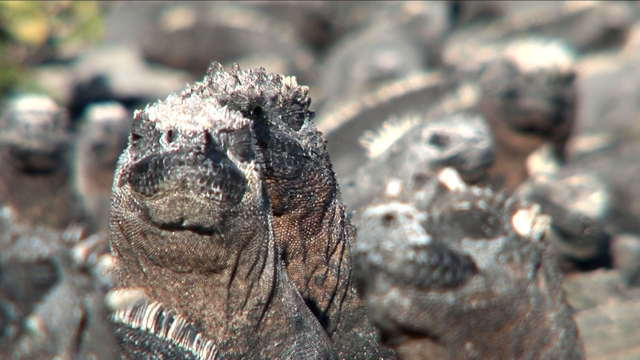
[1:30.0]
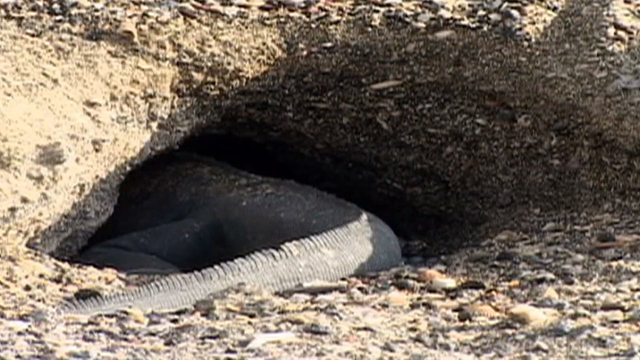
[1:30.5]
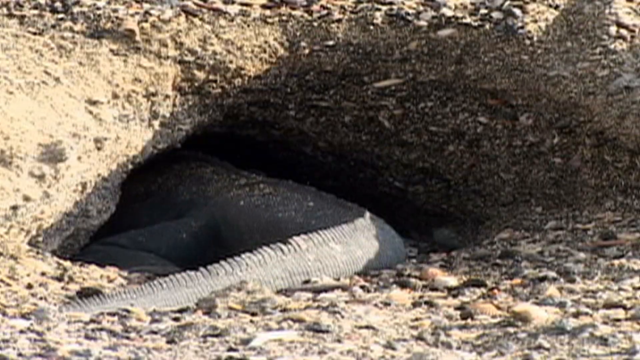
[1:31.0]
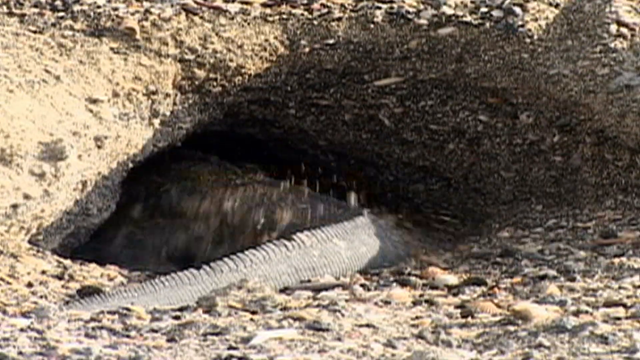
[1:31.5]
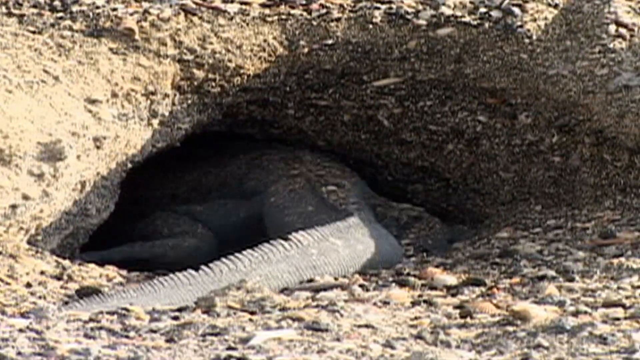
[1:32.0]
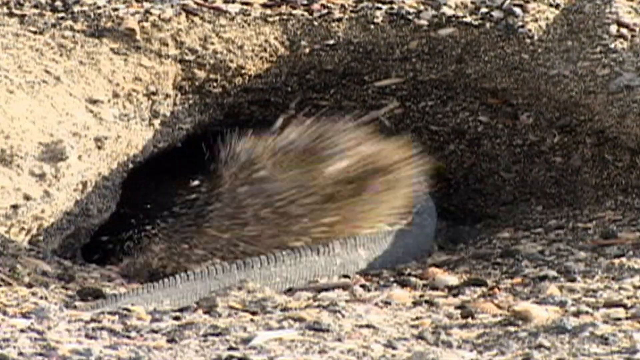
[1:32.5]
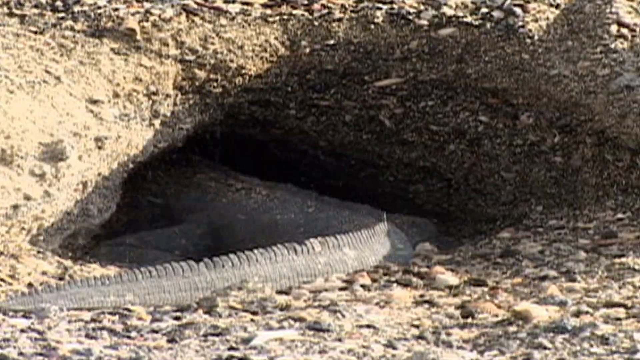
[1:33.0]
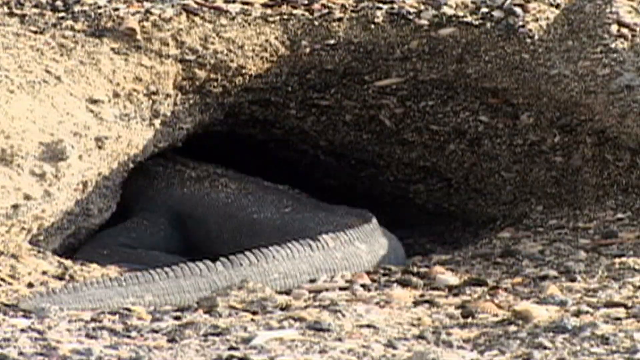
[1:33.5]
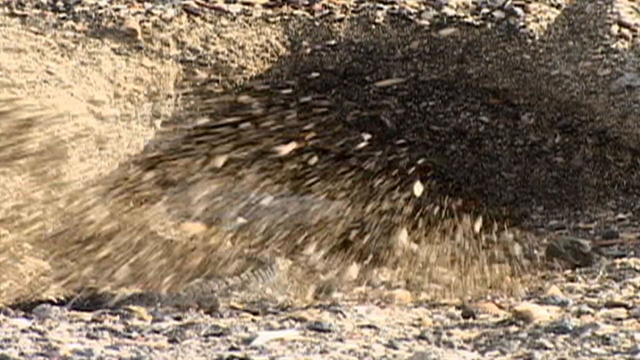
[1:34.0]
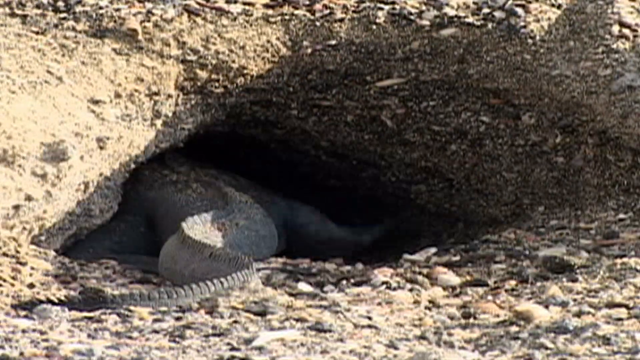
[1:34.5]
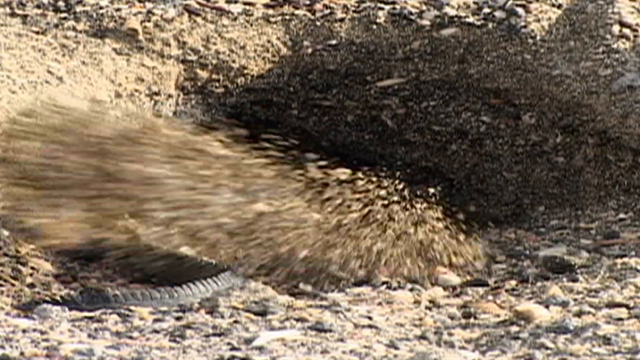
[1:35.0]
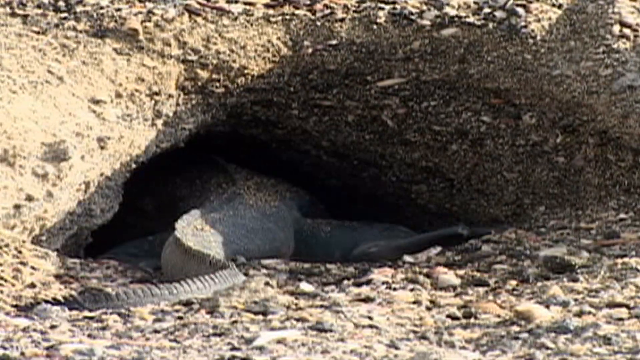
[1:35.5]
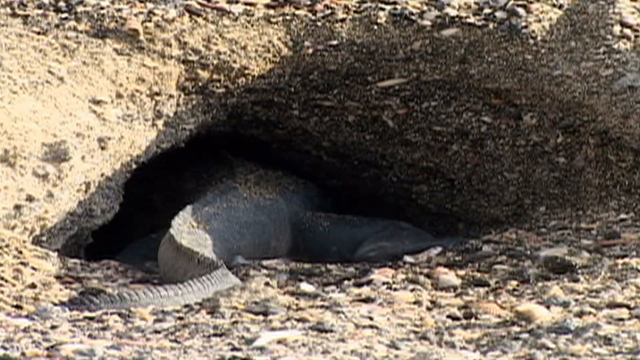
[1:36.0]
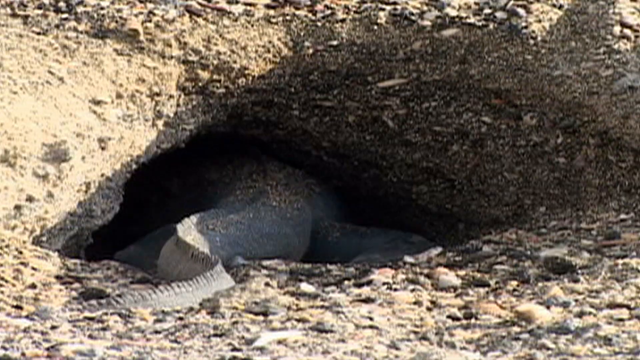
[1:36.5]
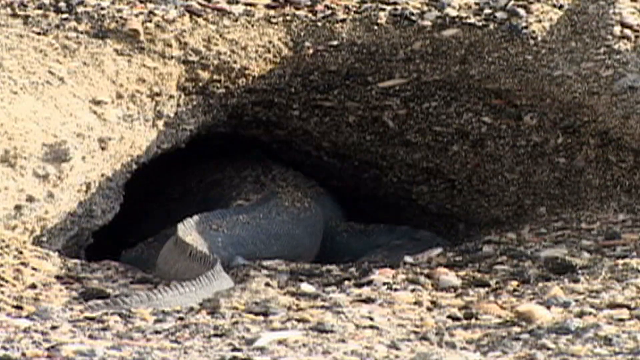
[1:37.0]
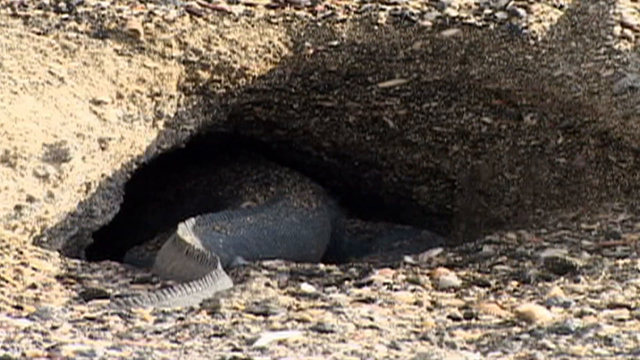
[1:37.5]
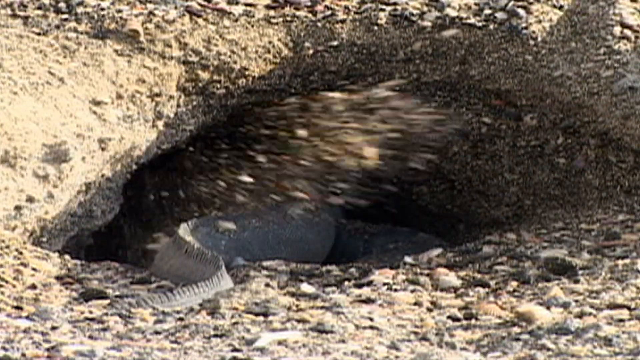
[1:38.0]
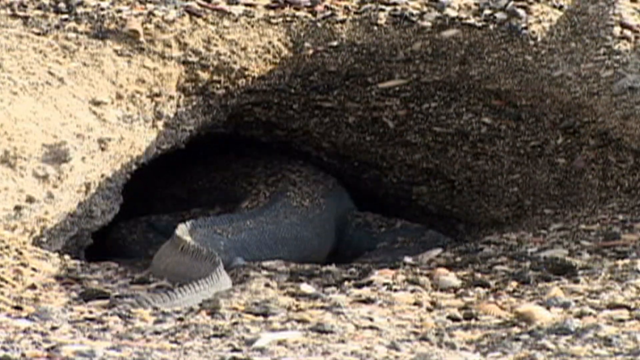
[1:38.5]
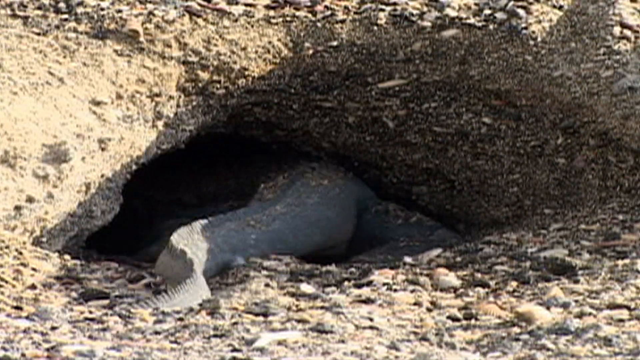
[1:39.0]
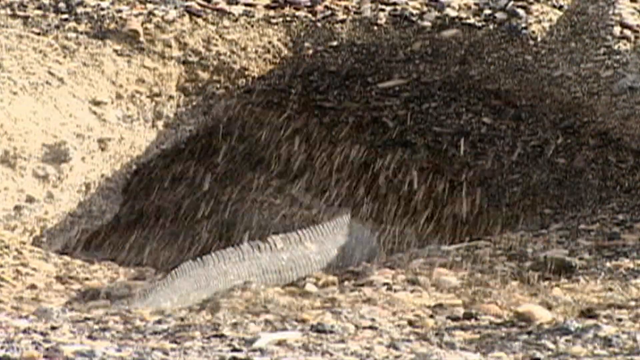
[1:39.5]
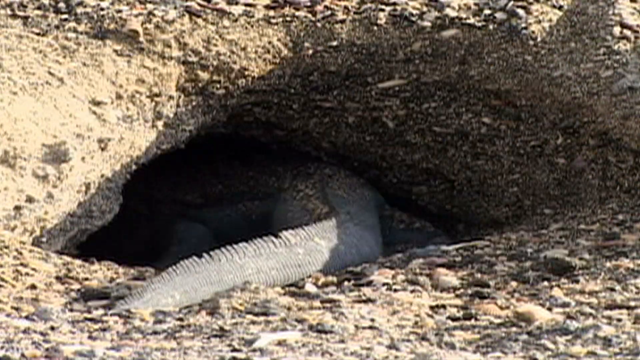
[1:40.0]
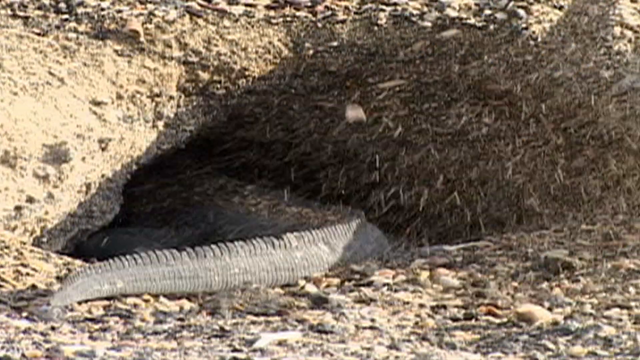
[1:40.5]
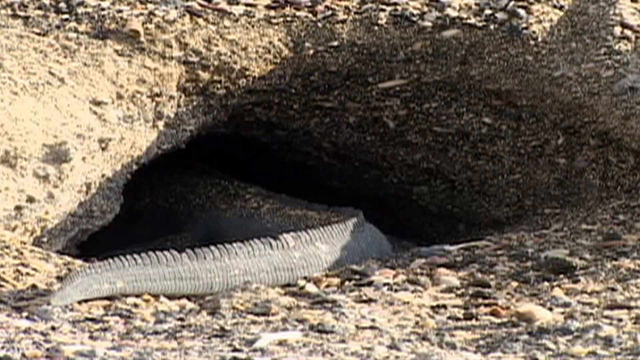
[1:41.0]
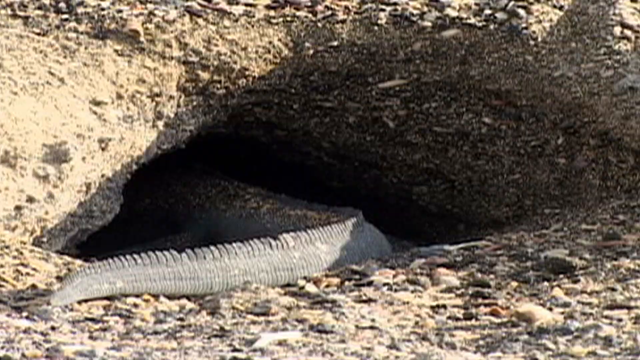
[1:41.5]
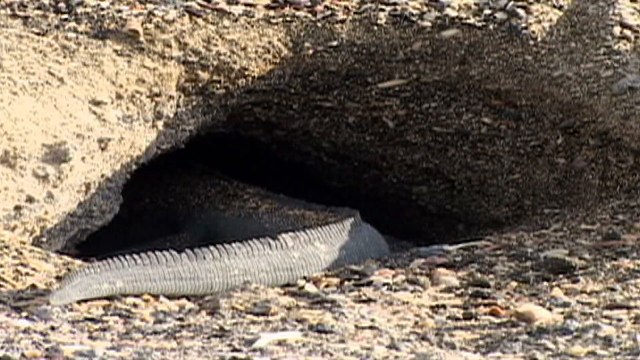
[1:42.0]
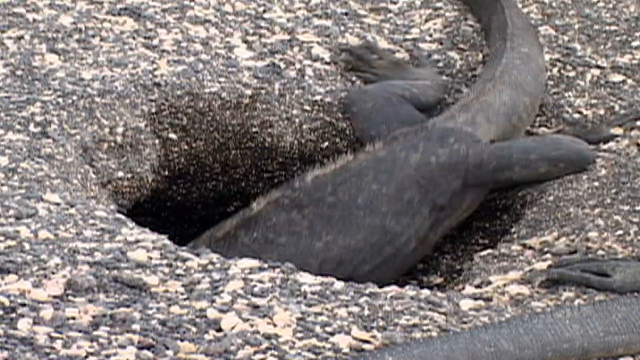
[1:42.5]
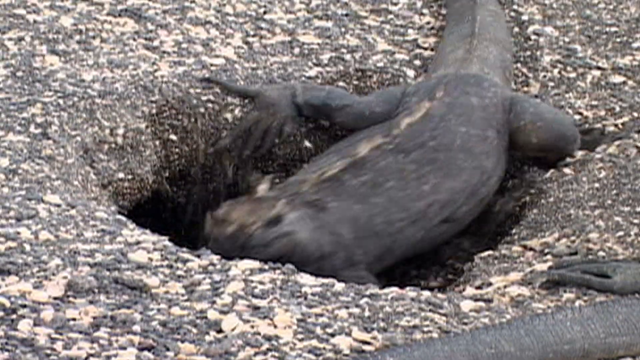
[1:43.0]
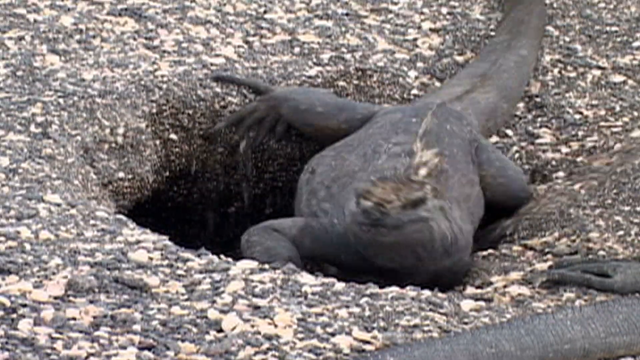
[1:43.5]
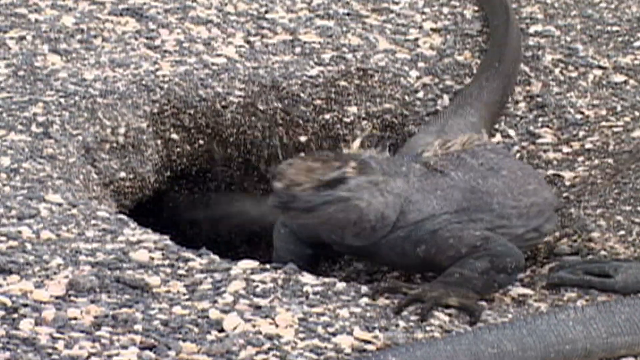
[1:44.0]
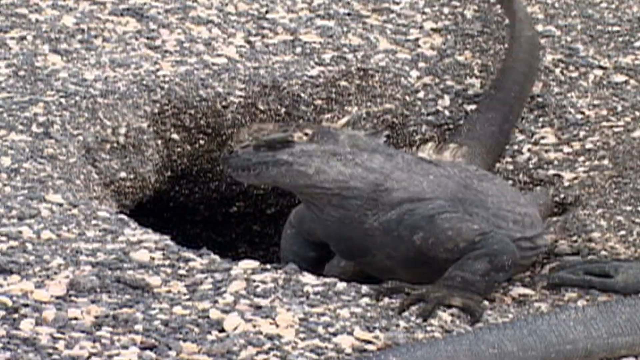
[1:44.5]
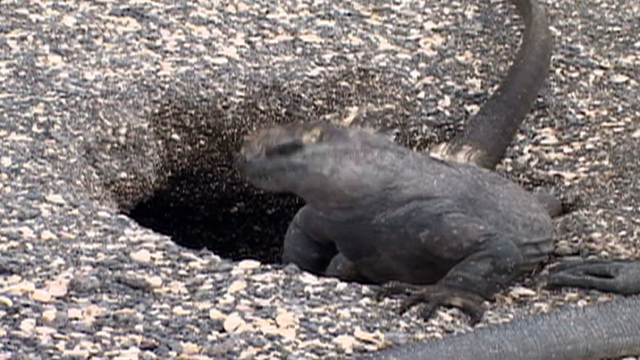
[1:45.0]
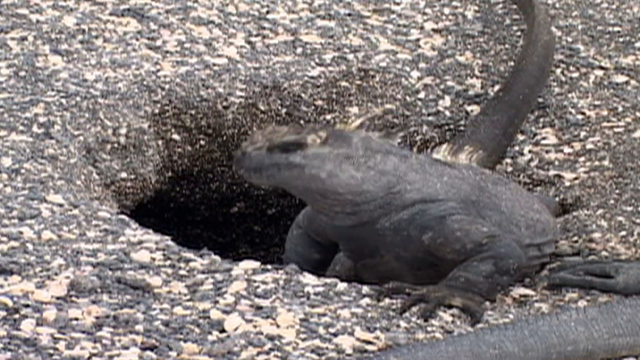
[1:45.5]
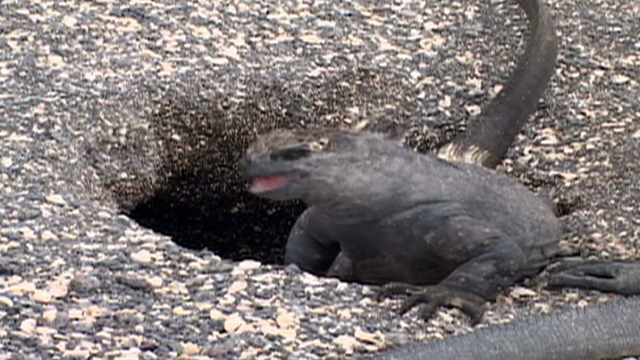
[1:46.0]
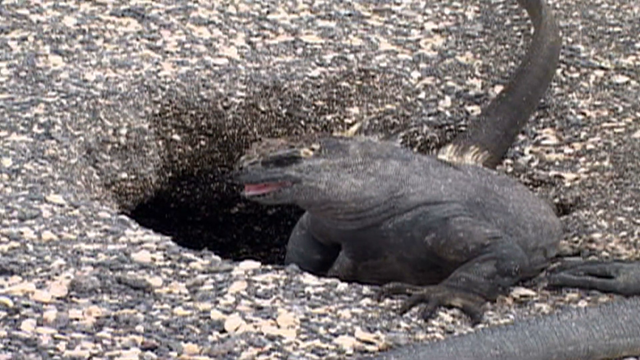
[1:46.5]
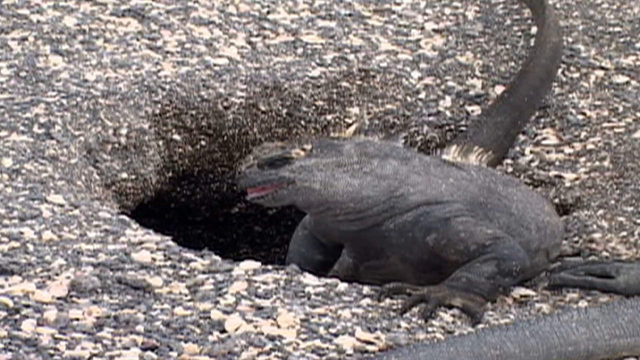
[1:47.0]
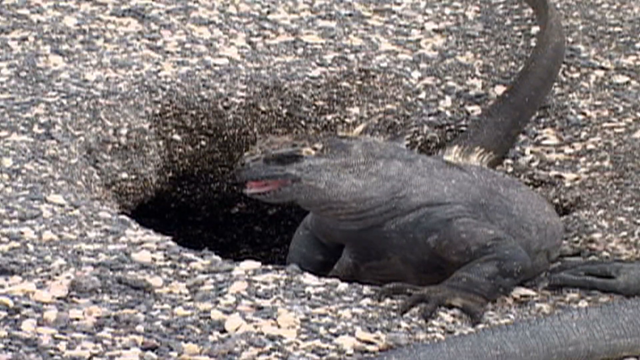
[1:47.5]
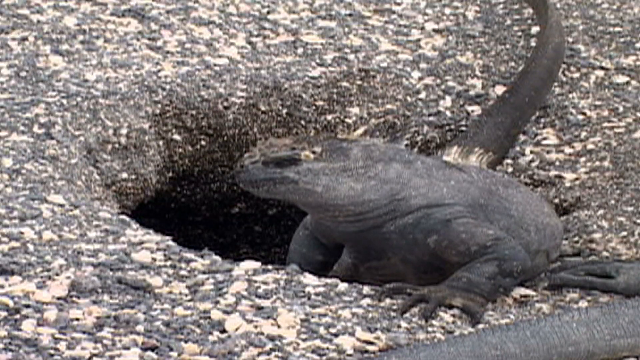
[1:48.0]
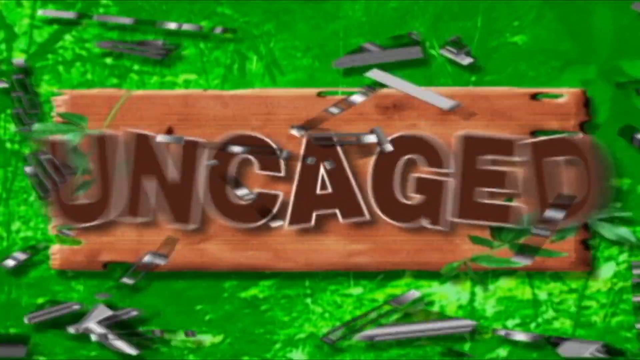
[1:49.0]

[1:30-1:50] The iguanas rest with their eyes closing as the sun hits them, near direct but not direct. The scene transitions to an iguana digging a hole, its front hands and legs moving the dirt behind it as it digs into a burrow. Its tail moves slowly, and dirt flies out and lands on the iguana. The iguana finishes its hole and climbs out, slowly opening its mouth. Its eyes are black, and it seems to be young, as its scales are not as big. It seems to twitch its head up and down while leaving its mouth open. The focus is on this single iguana and the hole in the ground, which it seems to be digging for a nest, possibly a home. Then the video transitions to a scene that says "uncaged".